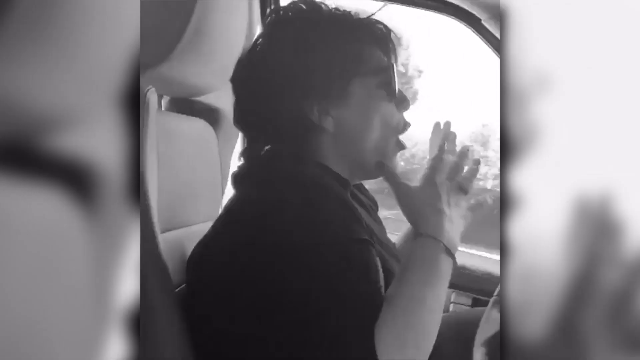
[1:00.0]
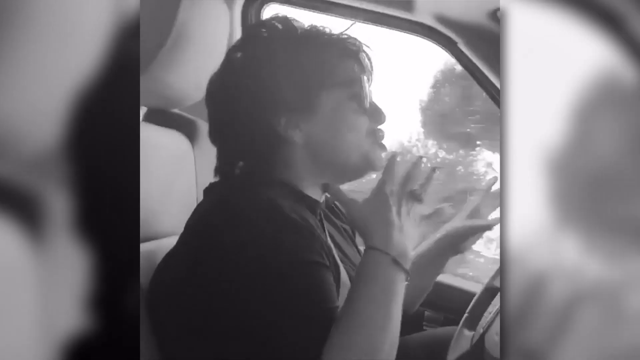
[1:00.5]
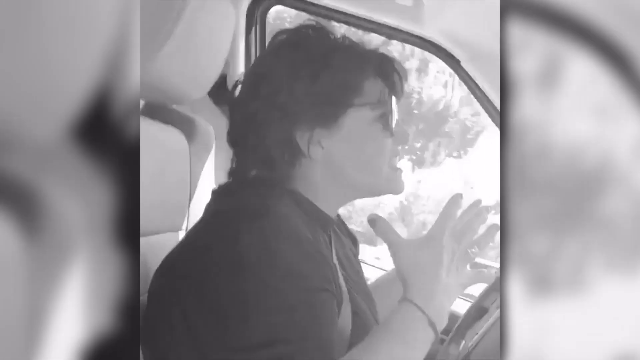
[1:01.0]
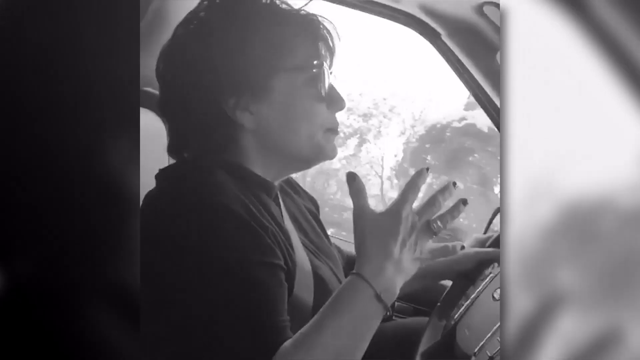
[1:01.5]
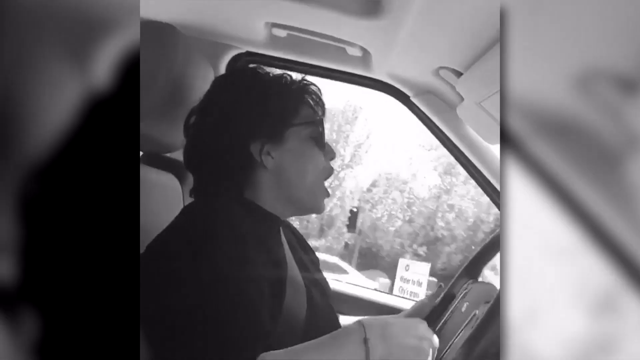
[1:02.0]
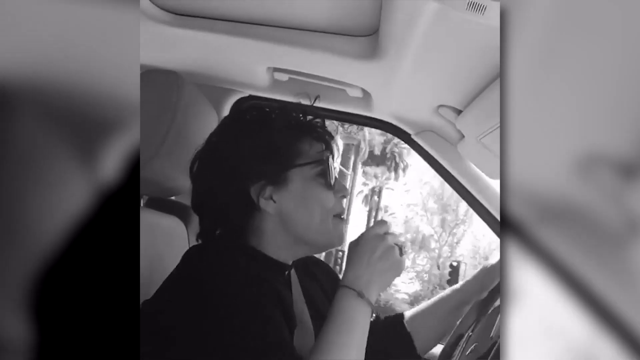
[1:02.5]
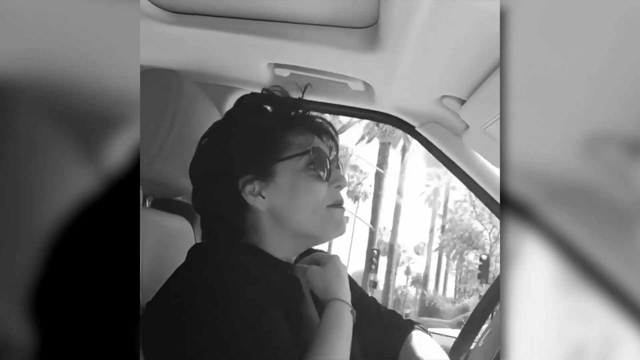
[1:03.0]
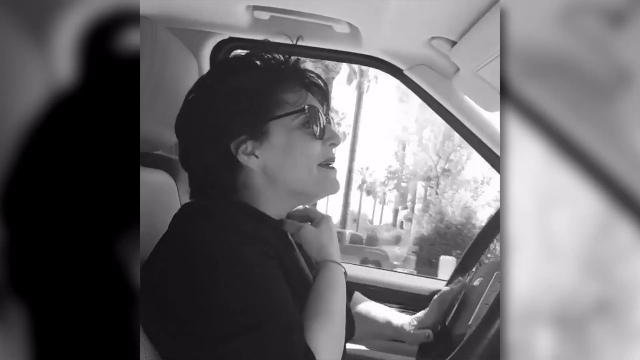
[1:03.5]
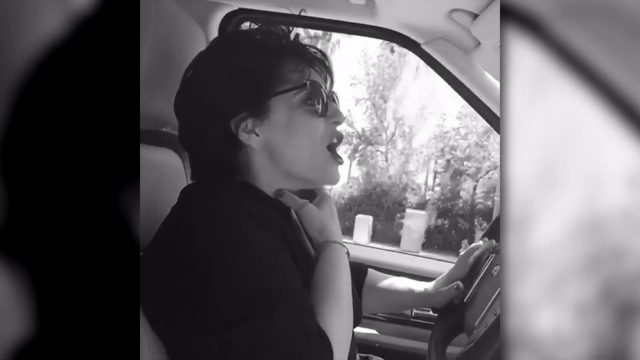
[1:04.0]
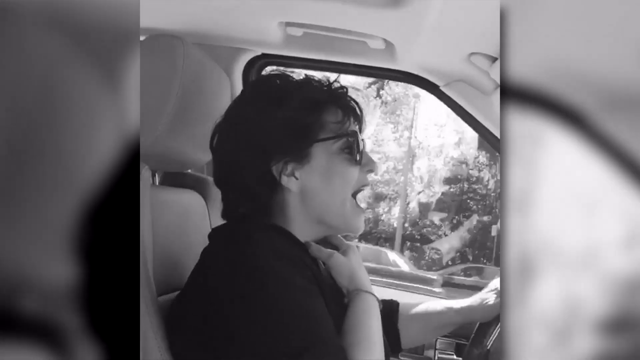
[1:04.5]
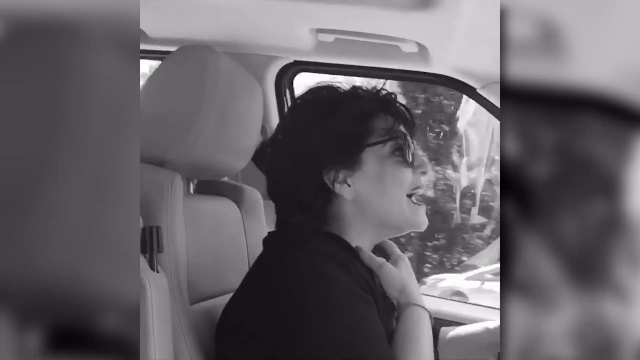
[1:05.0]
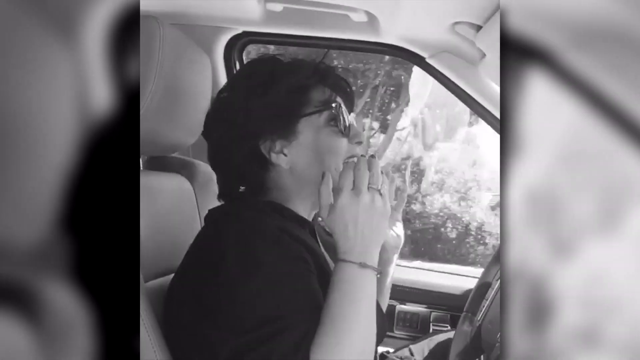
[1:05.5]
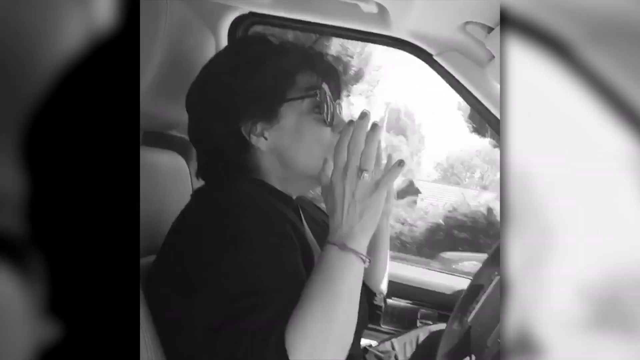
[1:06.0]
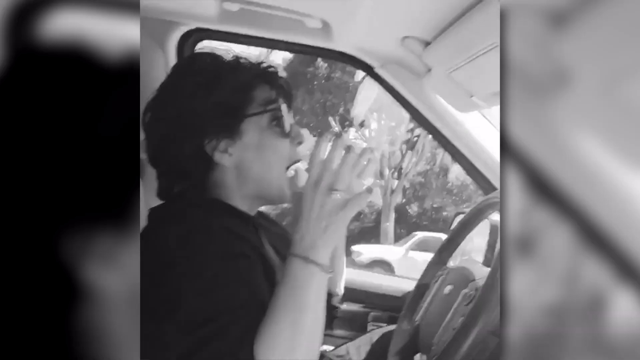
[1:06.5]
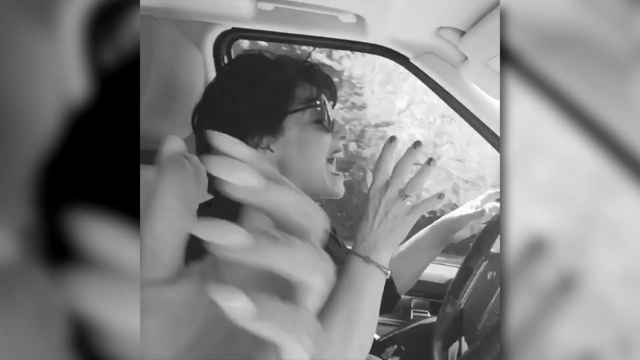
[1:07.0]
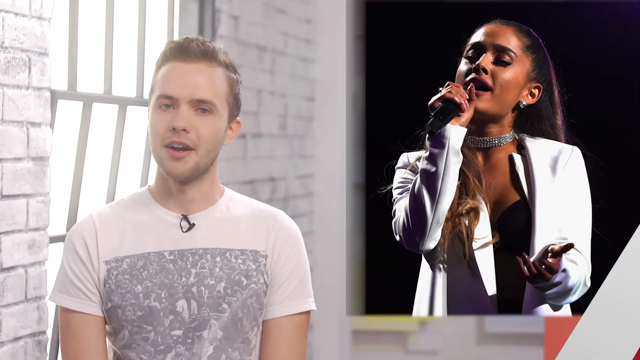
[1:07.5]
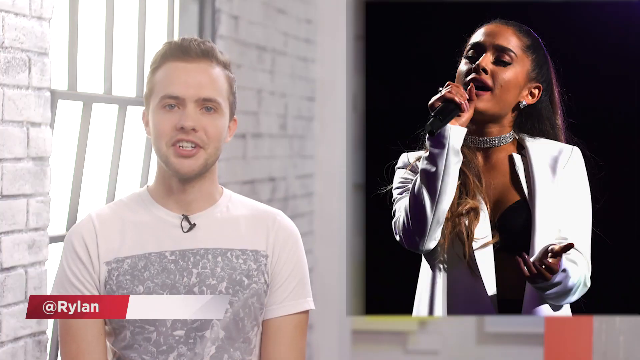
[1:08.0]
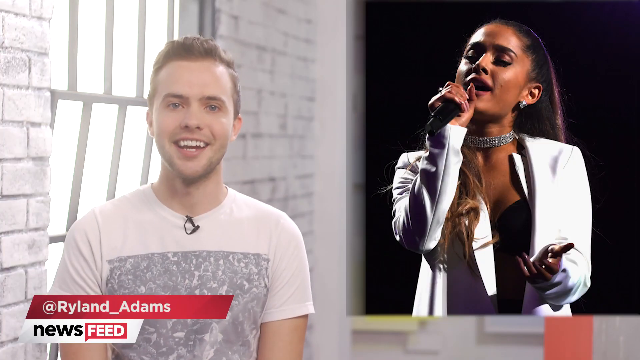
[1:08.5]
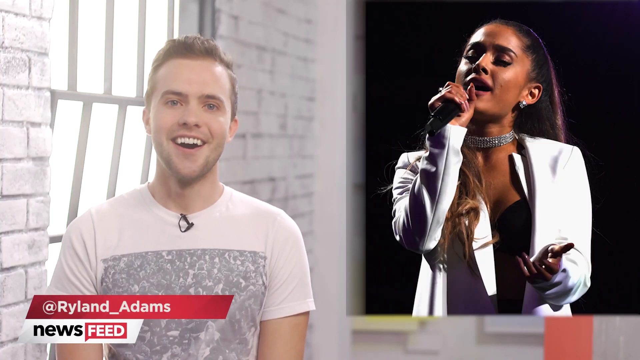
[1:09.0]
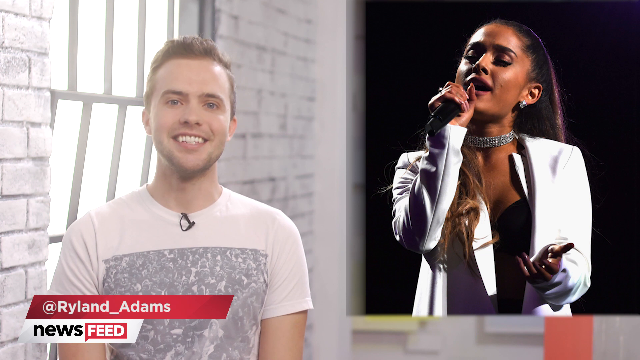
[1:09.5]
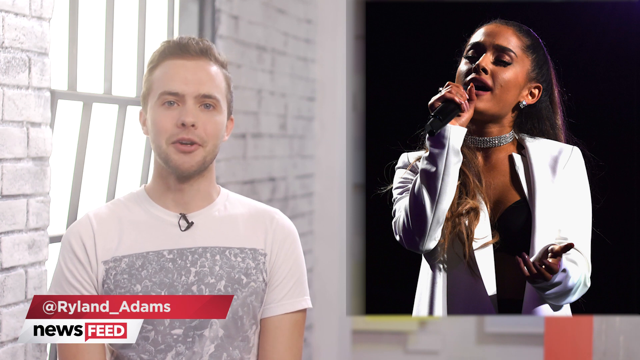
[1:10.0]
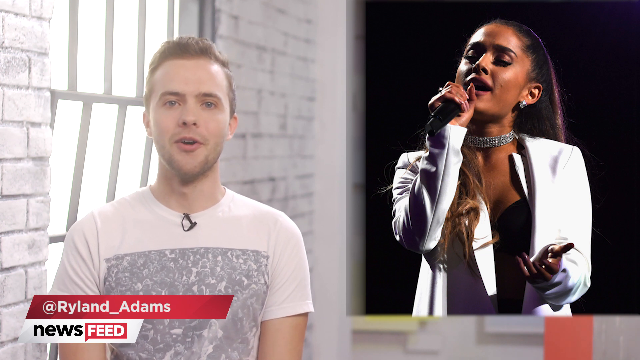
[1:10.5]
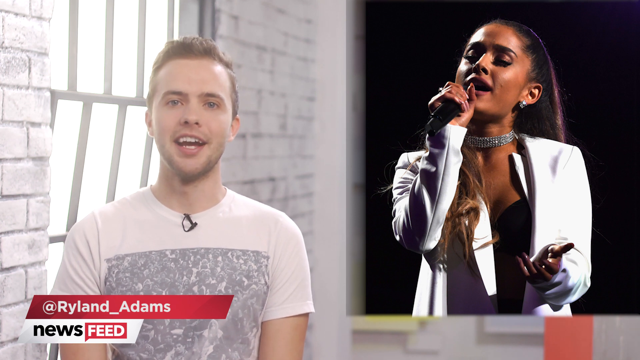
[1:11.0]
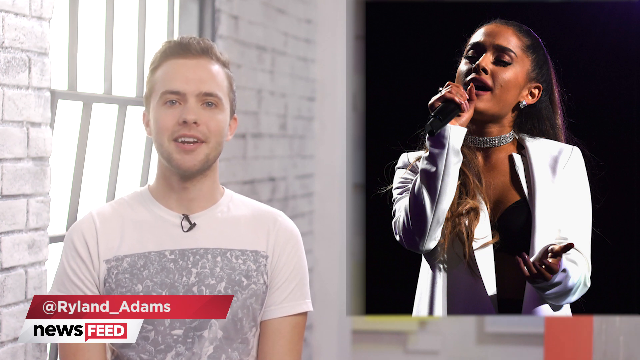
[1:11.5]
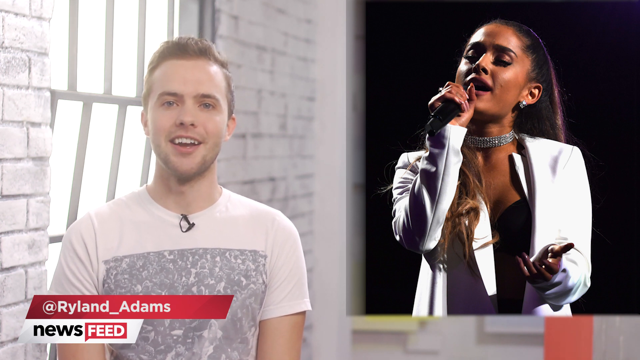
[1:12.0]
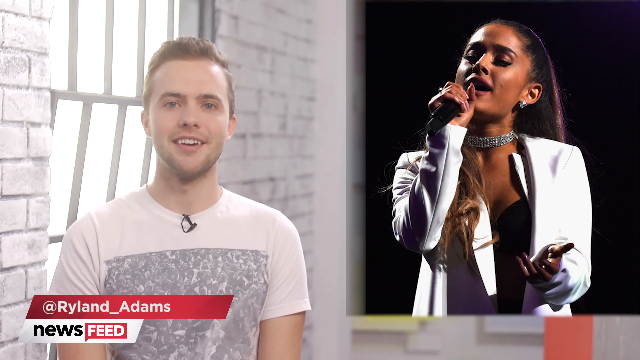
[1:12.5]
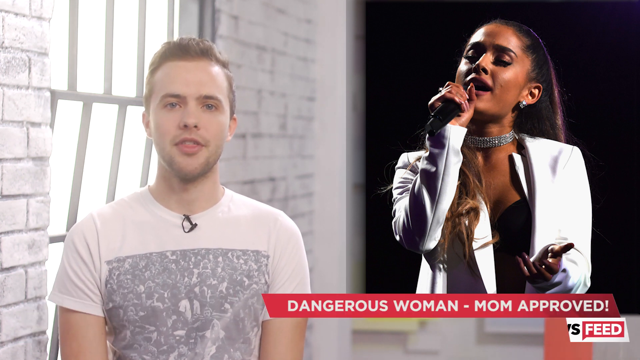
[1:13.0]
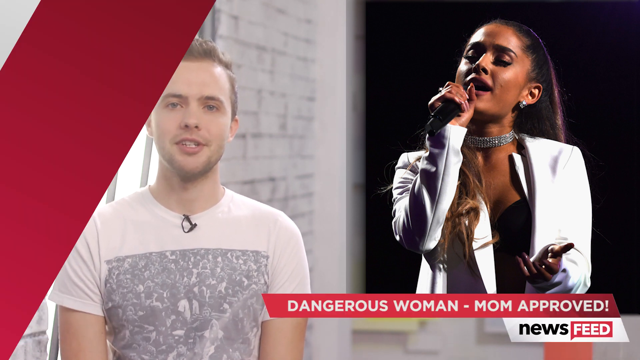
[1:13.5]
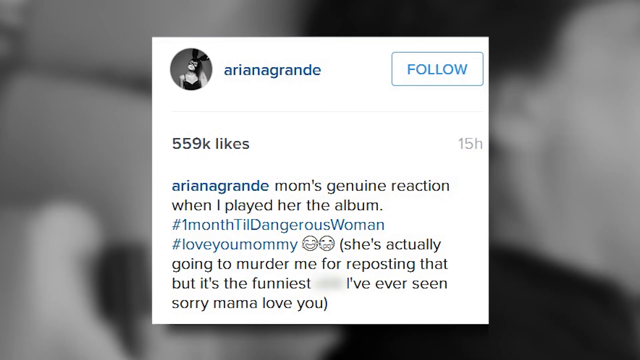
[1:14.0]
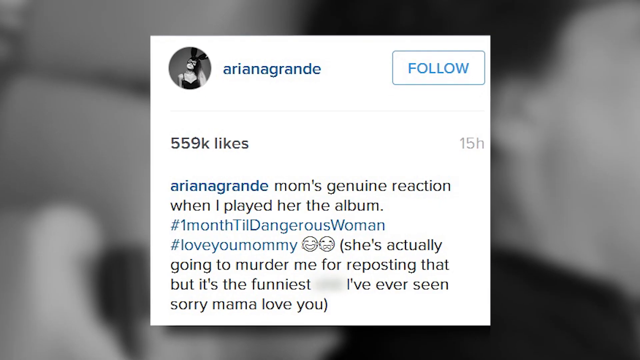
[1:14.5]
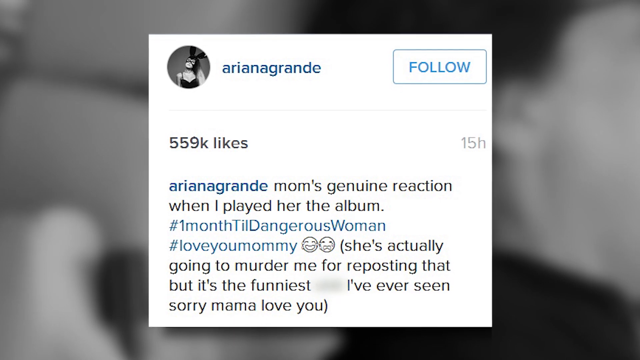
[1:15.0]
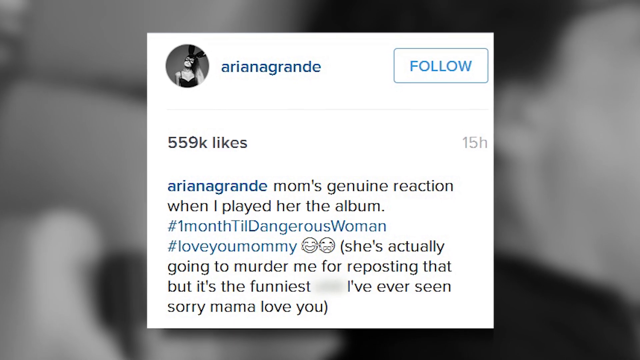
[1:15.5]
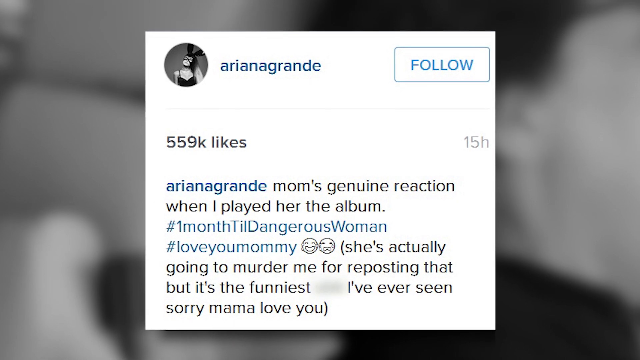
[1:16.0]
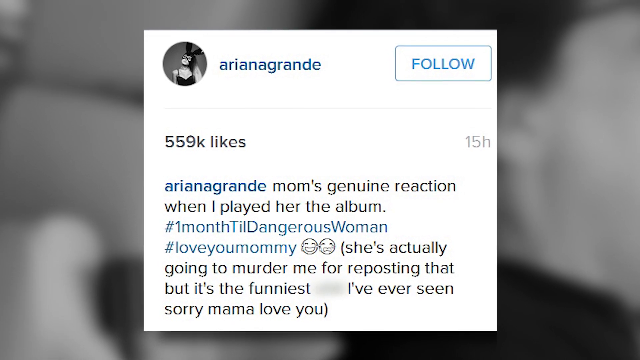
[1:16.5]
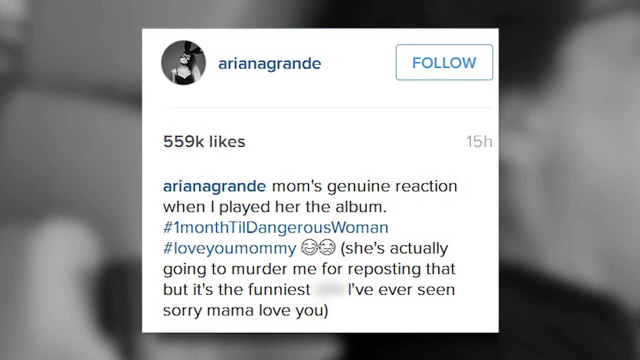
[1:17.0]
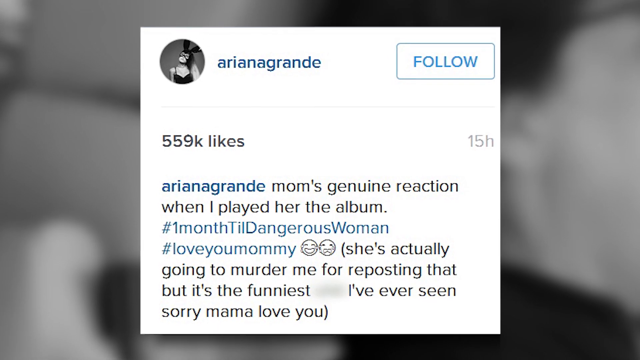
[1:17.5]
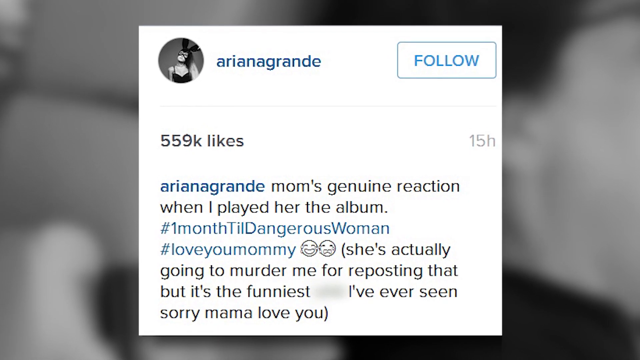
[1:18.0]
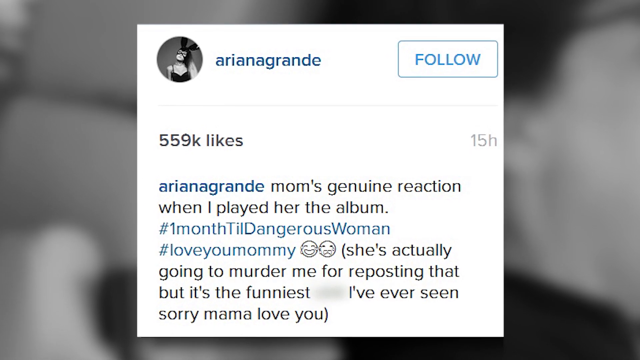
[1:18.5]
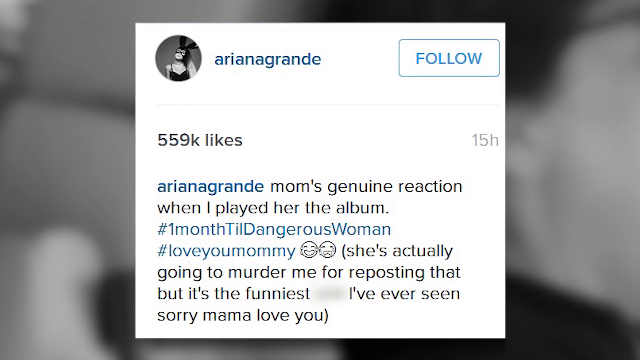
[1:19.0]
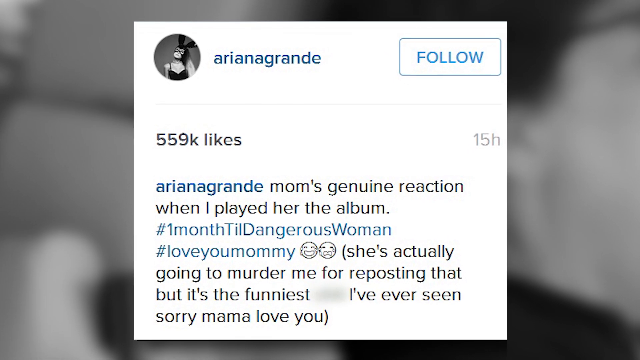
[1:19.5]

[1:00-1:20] A Caucasian woman with short, layered dark hair sits in her car, driving in the daytime and wearing dark sunglasses. She is seen only from her right side, as if filmed from the passenger seat, and the car's interior is white. She talks very animatedly and emotionally, at one moment putting her right hand to her neck. The video then cuts back to the young man's studio or apartment, where he speaks beside a screen on his right showing Ariana Grande performing, holding a microphone, wearing a white jacket and a choker, with her hair pulled back. White text at the lower left of the screen, in front of his chest, gives his name, Ryland Adams, on a red banner that also shows the name of the show, News Feed.